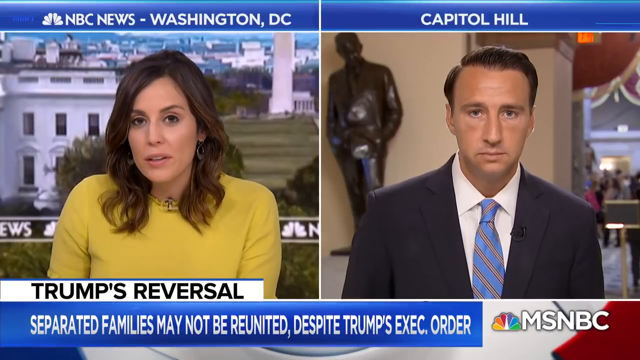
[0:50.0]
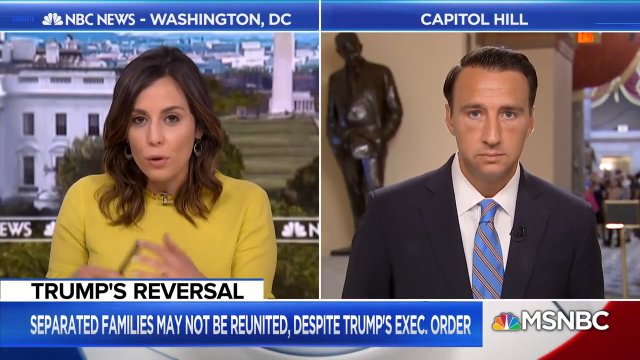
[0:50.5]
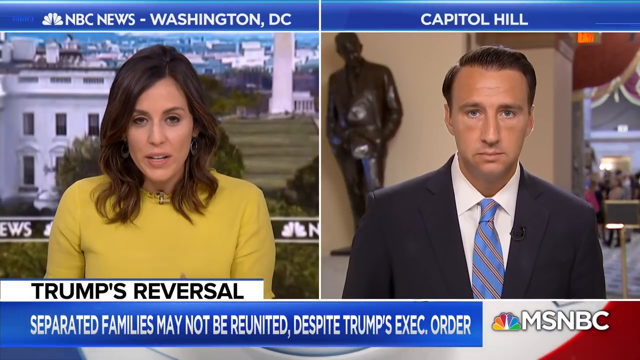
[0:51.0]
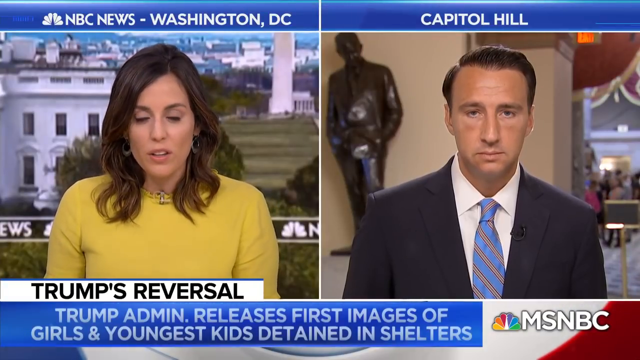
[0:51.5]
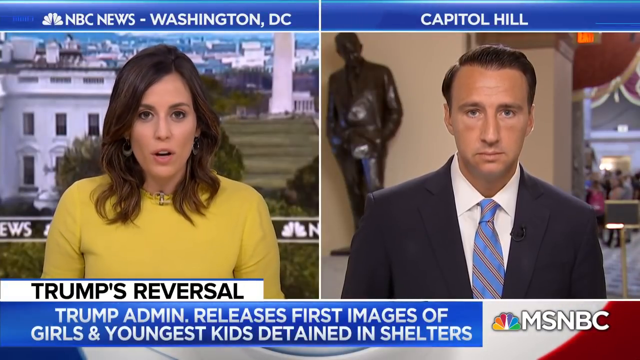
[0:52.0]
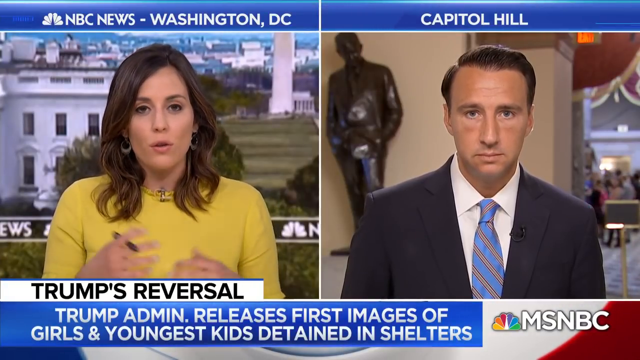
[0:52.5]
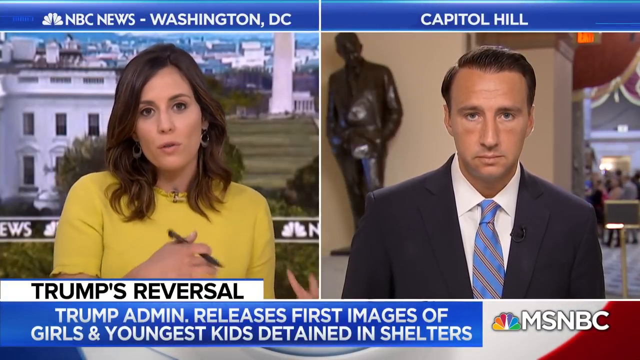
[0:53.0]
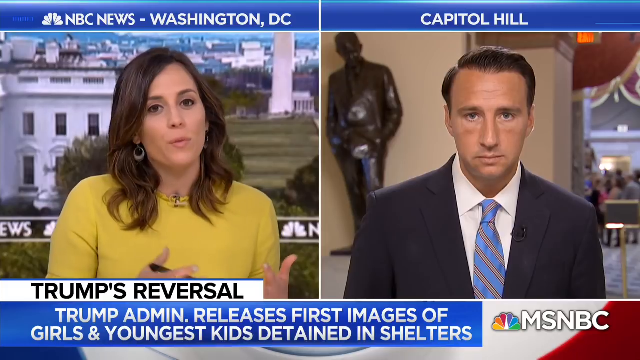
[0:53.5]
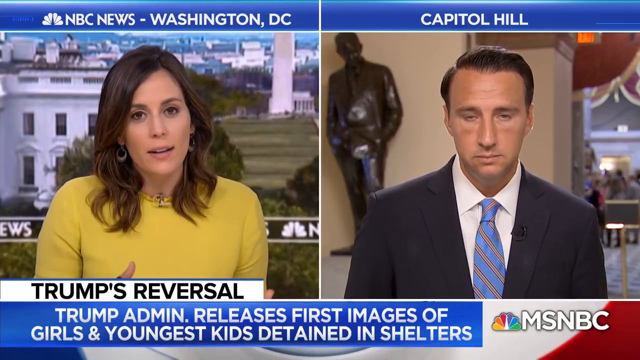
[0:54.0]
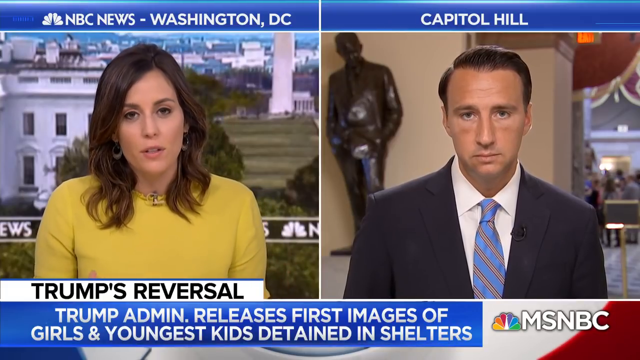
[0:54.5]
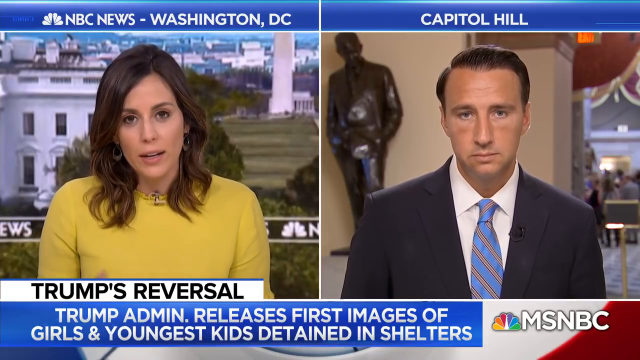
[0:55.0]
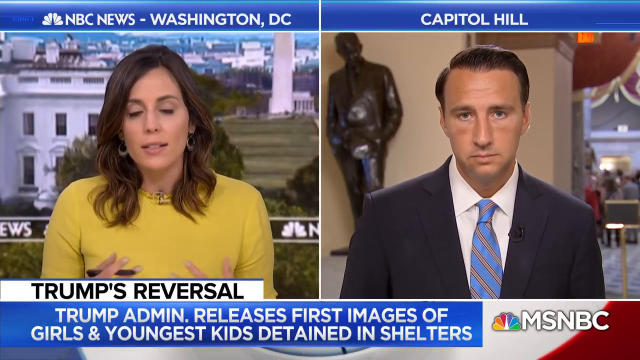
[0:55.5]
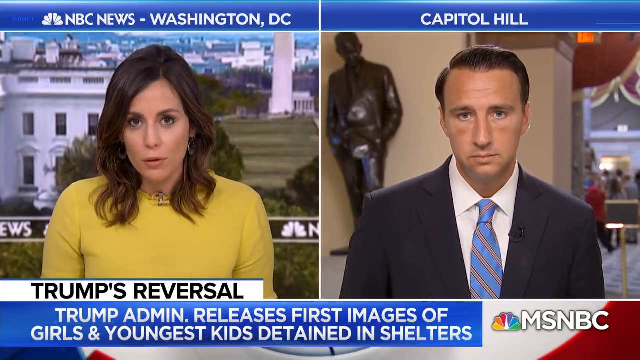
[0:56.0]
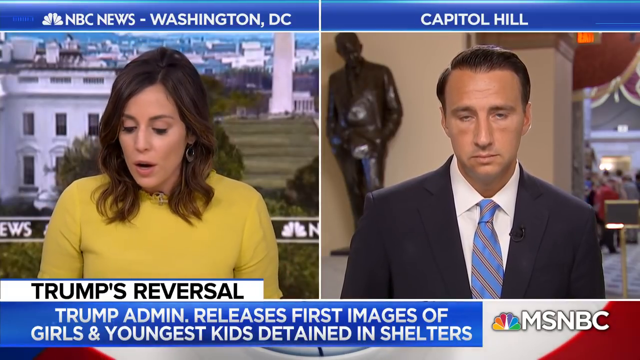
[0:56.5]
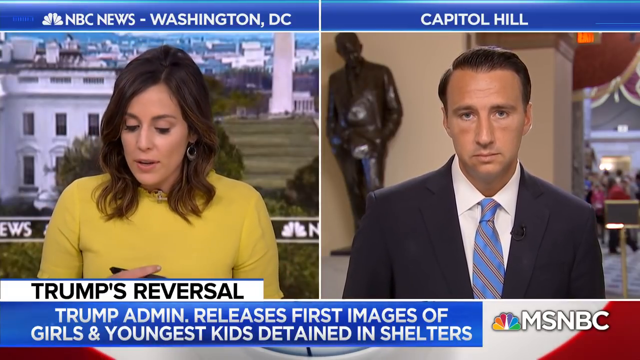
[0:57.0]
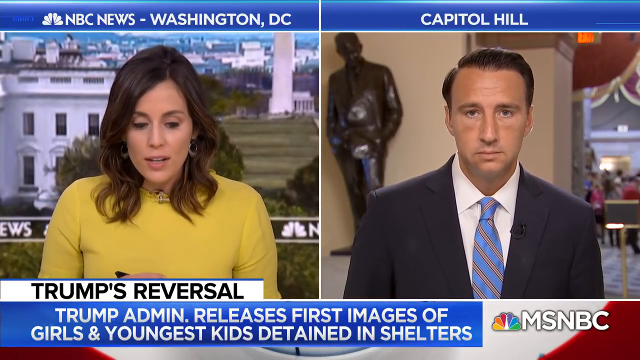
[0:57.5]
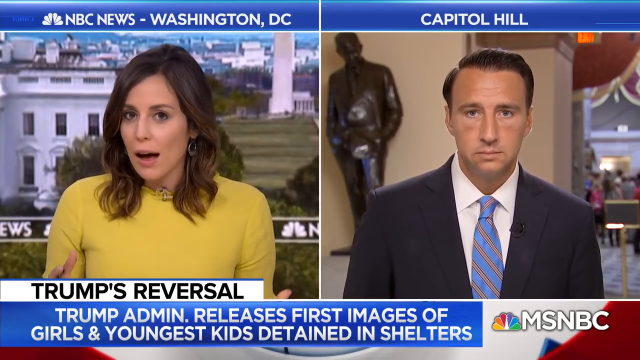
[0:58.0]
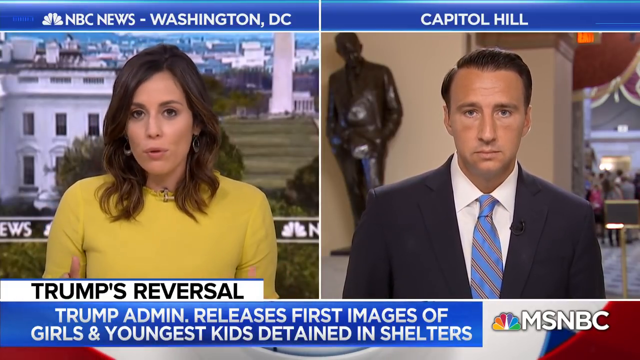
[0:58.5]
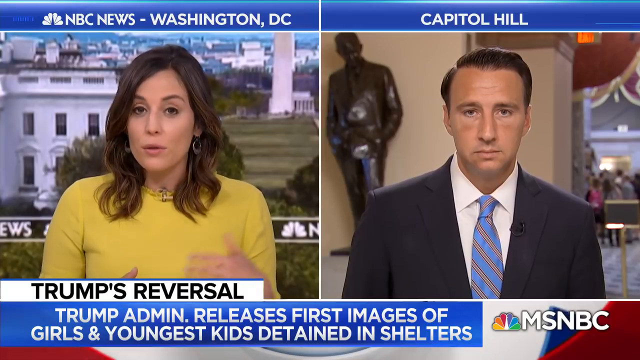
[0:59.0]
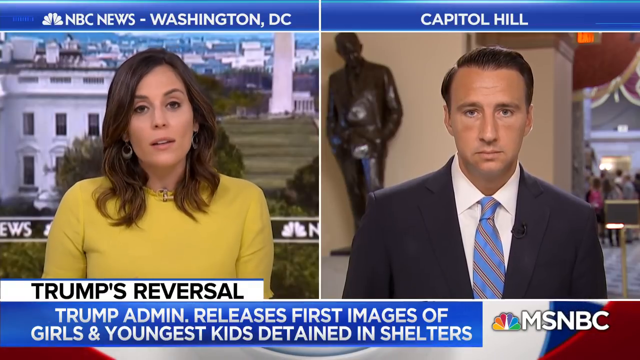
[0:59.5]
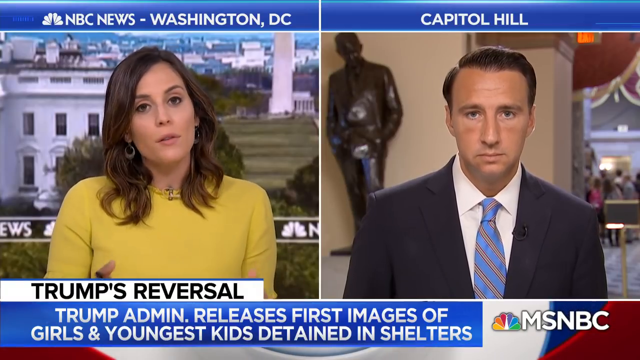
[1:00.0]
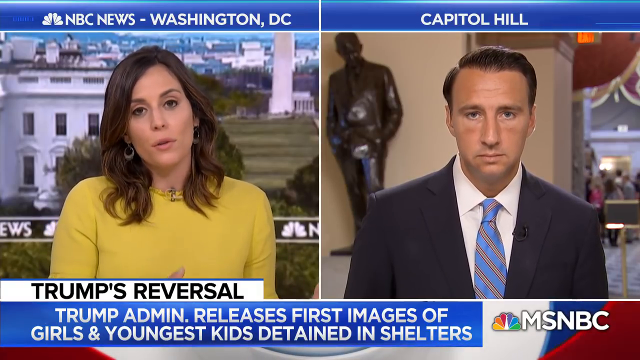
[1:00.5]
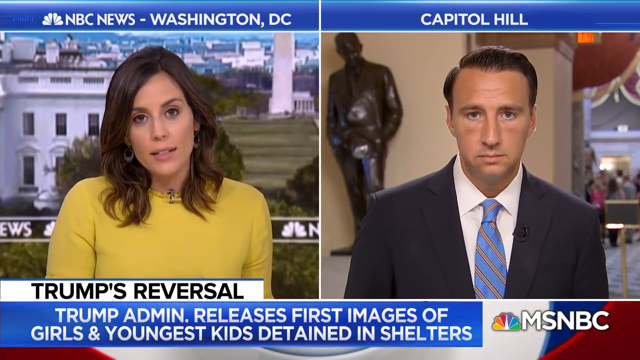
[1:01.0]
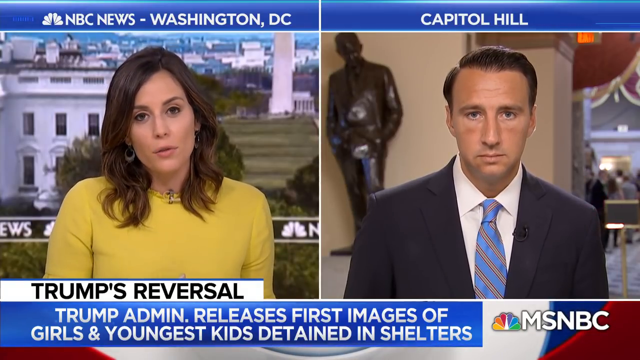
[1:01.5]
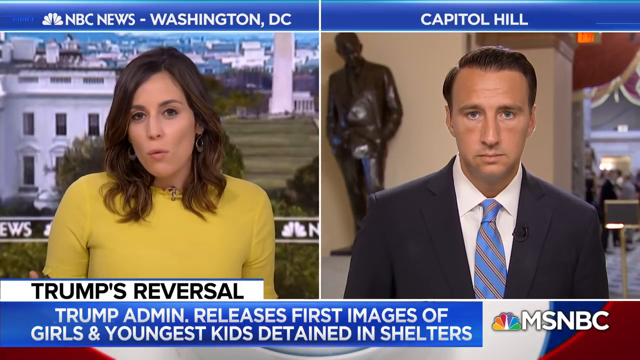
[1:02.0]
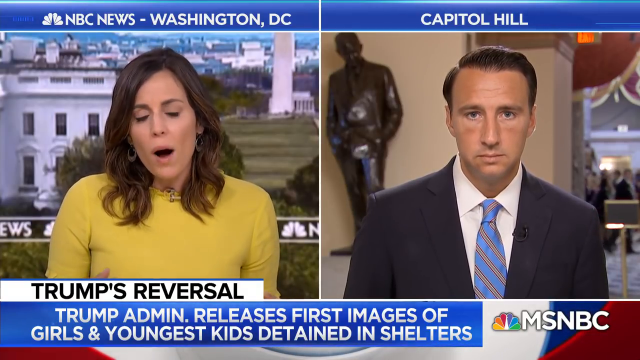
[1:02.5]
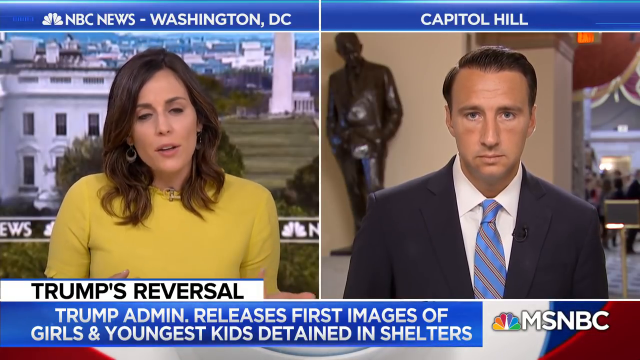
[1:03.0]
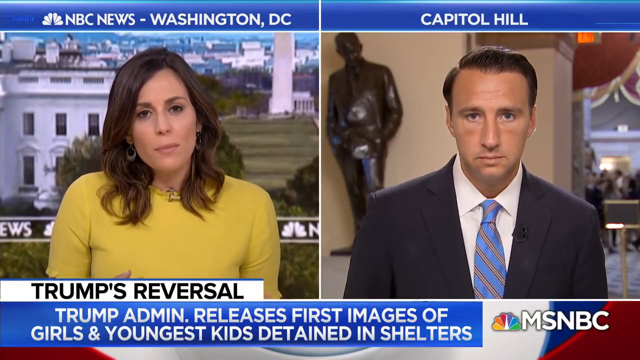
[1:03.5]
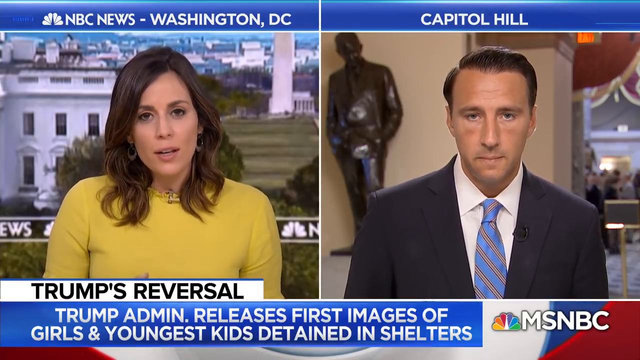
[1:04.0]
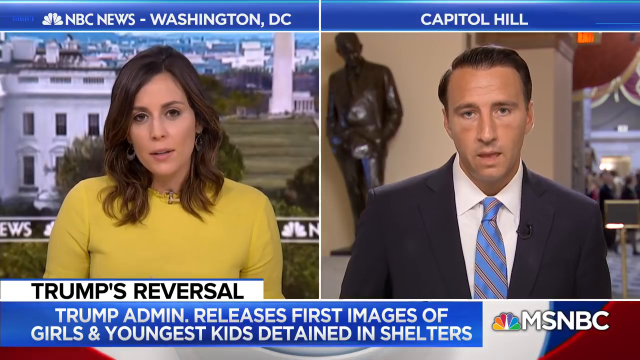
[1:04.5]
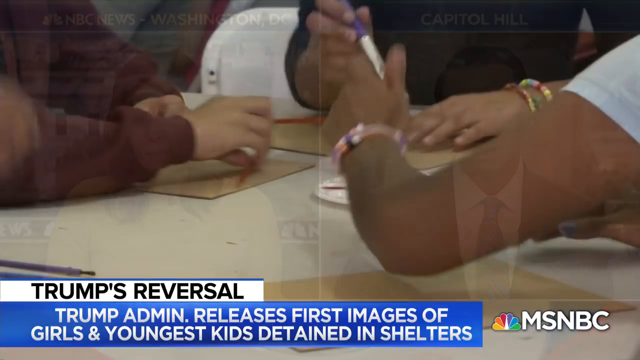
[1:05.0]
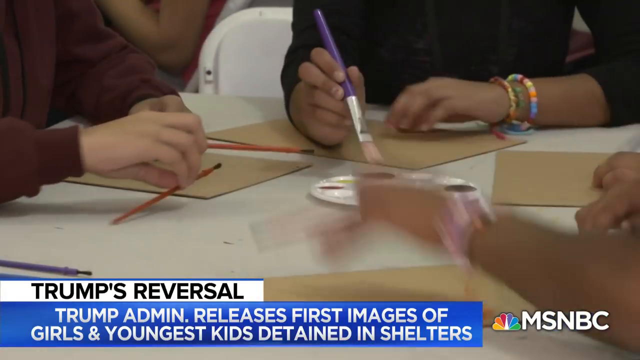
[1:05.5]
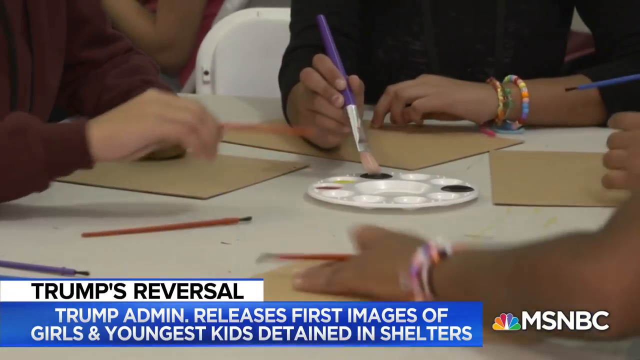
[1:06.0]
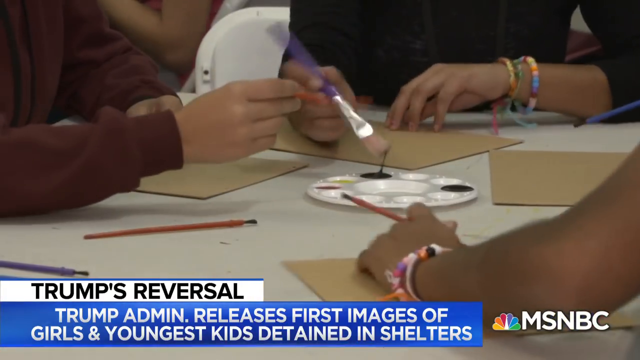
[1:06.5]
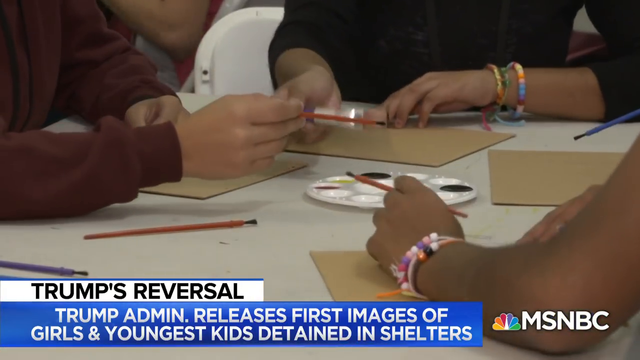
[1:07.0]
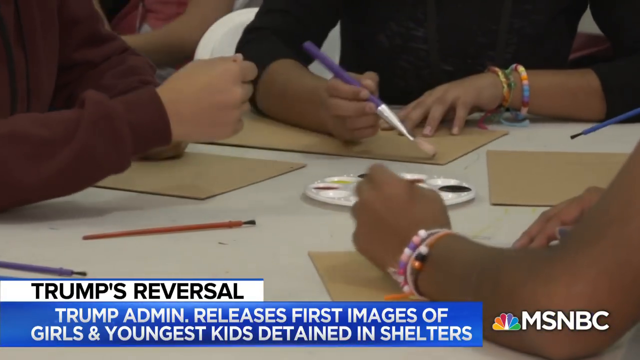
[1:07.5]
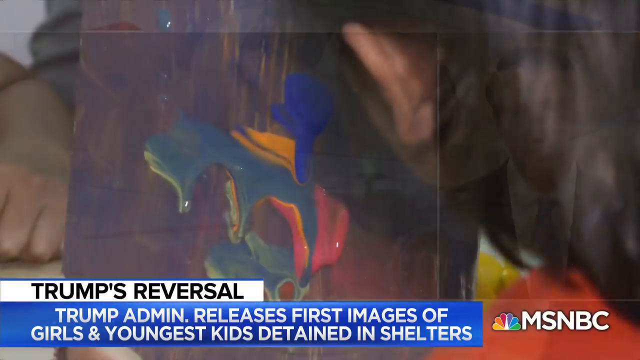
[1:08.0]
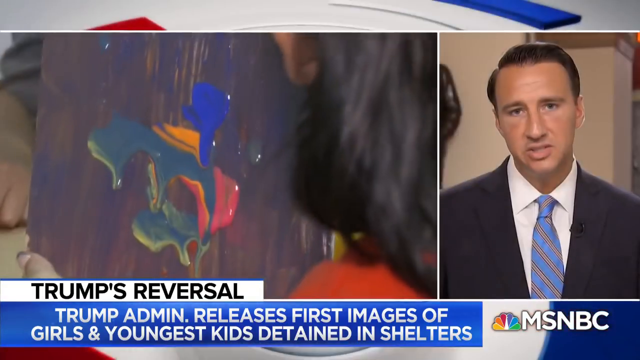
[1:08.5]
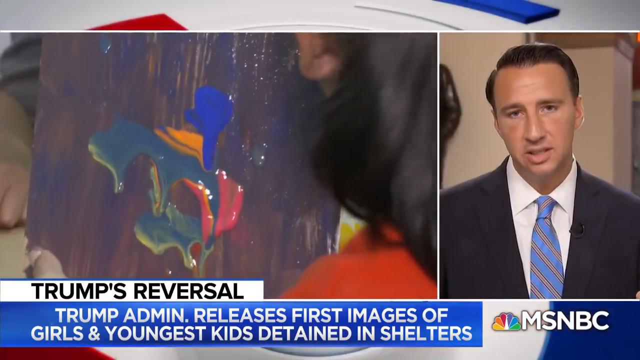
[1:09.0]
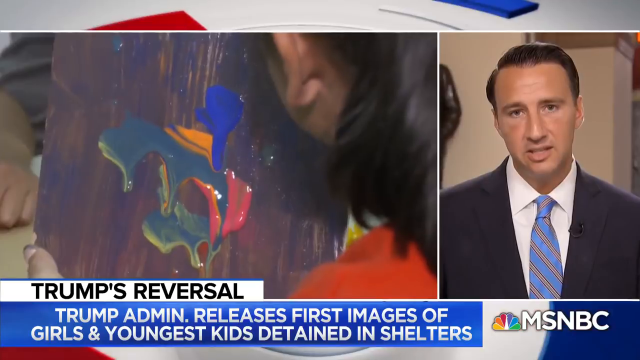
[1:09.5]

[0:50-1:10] The screen returns to a 50-50 split. On the left is the news host Hallie Jackson, a Caucasian woman with shoulder-length brown hair, wearing a yellow short-sleeve top, a gold necklace and gold hoop earrings, with an image of Washington DC in her background. The top of the screen shows the NBC News logo and "NBC News Washington DC". On the right-hand side is "Capitol Hill" and Representative Ryan Costello, the Republican from Pennsylvania. The news crawl at the bottom is still titled "Trump's reversal", reading "separated families may not be reunited despite Trump's executive order", with MSNBC. Ms. Jackson asks the congressperson another question, holding a pen or pencil in her right hand and gesturing with both hands, moving them forward almost in a circular motion and then back and forth. The crawl then reads "Trump admin releases first images of girls and youngest kids detained in shelters". Video images follow of girls sitting around a round table, getting ready to paint with acrylic paint. One girl holds up a painting of dark colors like black and dark blue, with oranges and reds, muddled together.